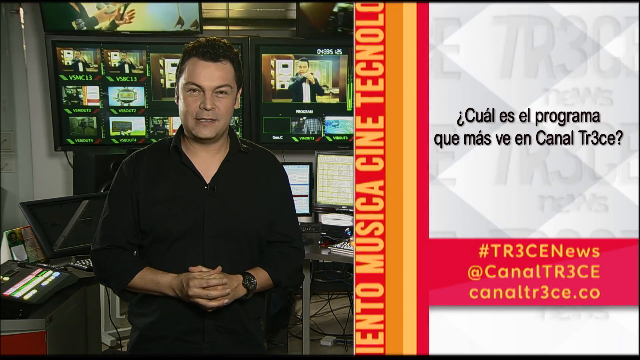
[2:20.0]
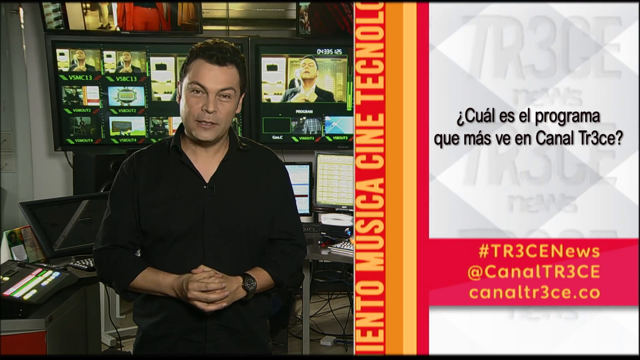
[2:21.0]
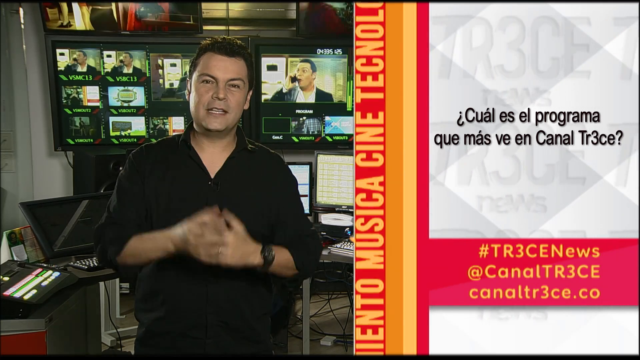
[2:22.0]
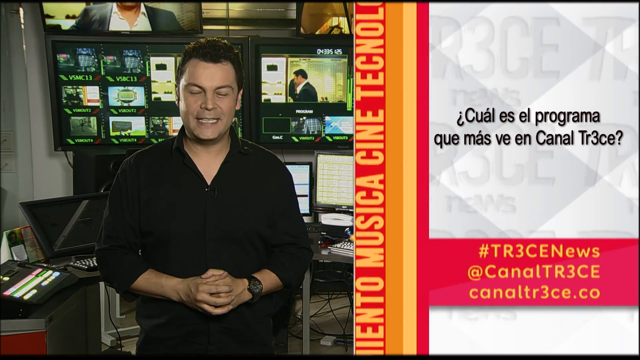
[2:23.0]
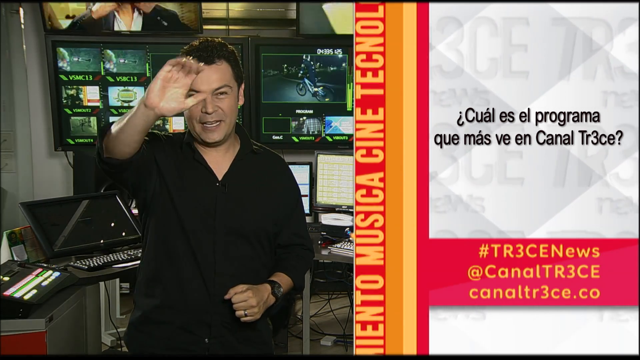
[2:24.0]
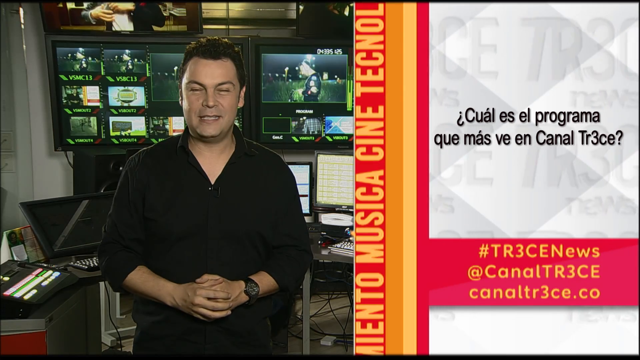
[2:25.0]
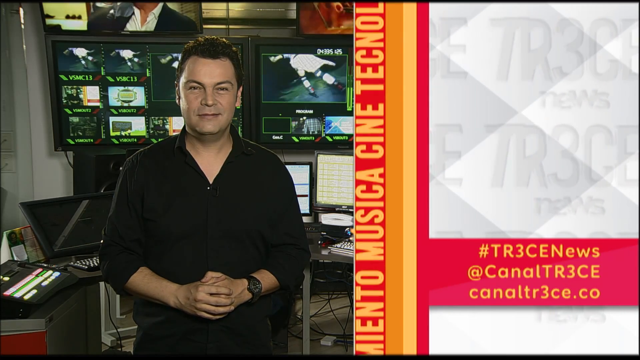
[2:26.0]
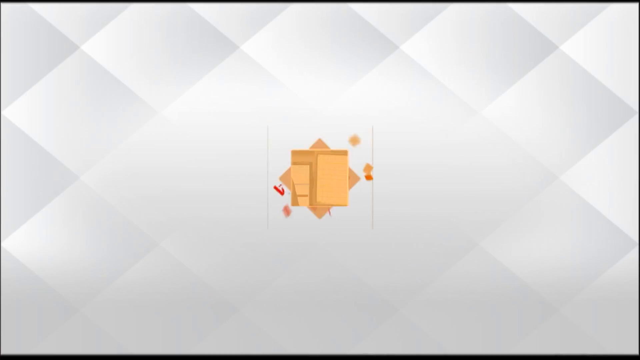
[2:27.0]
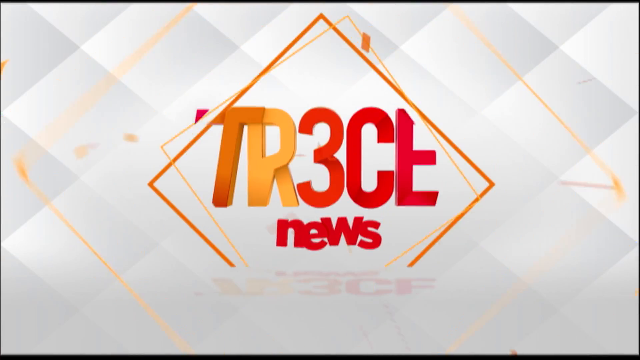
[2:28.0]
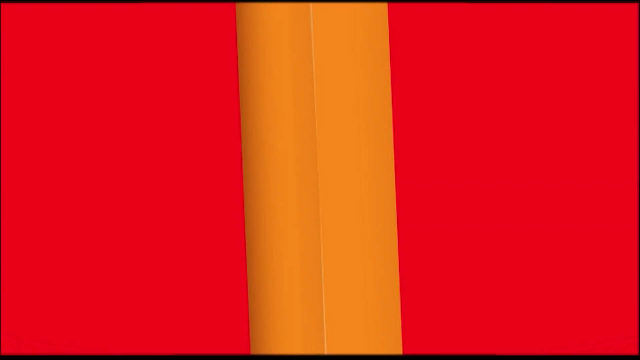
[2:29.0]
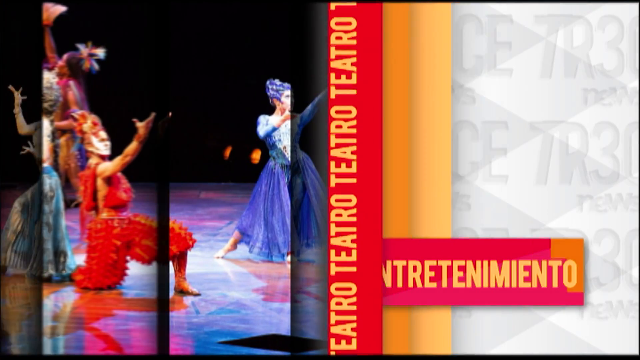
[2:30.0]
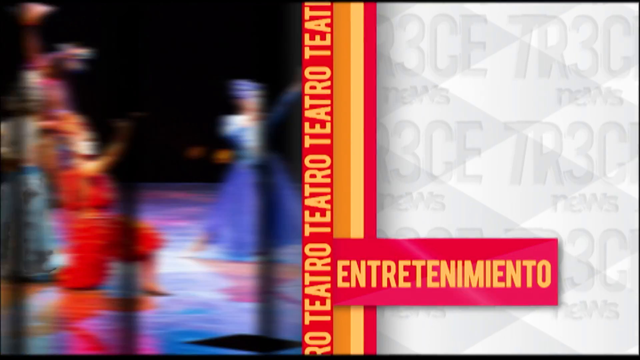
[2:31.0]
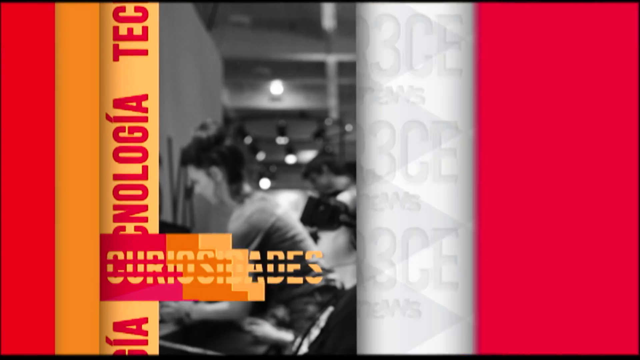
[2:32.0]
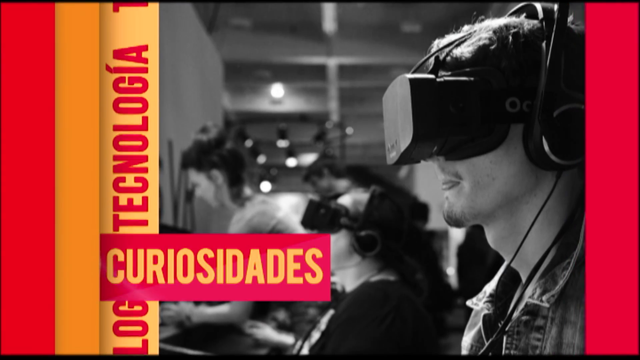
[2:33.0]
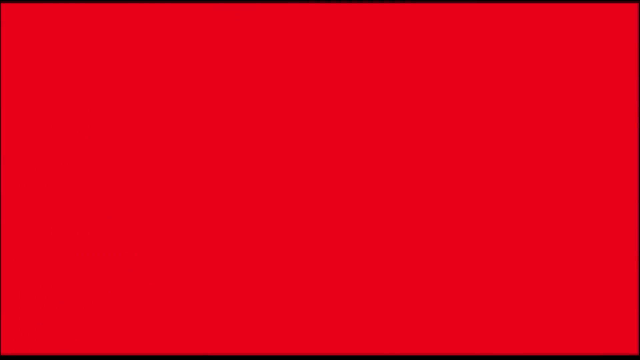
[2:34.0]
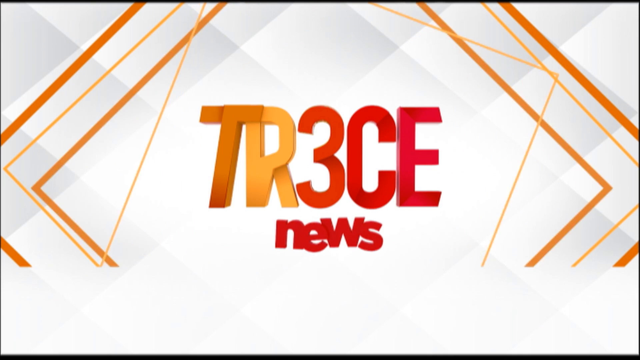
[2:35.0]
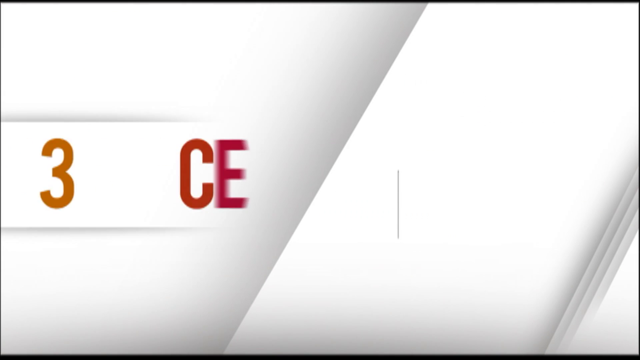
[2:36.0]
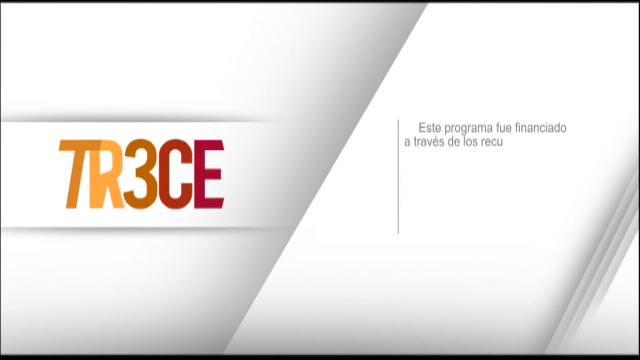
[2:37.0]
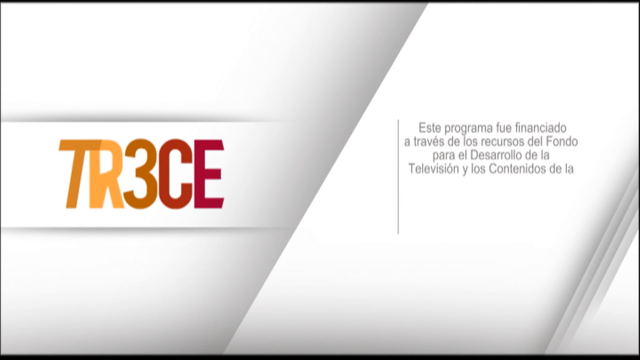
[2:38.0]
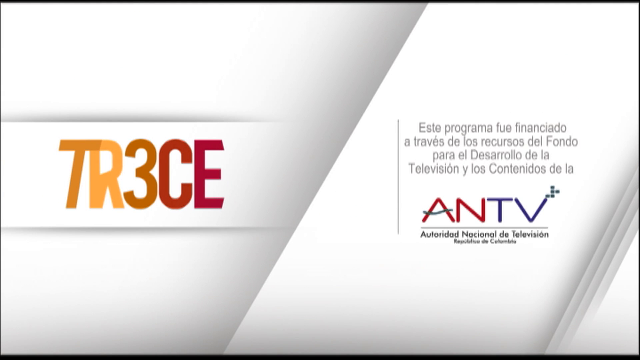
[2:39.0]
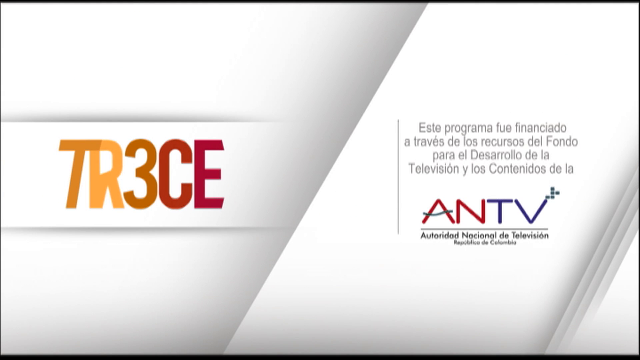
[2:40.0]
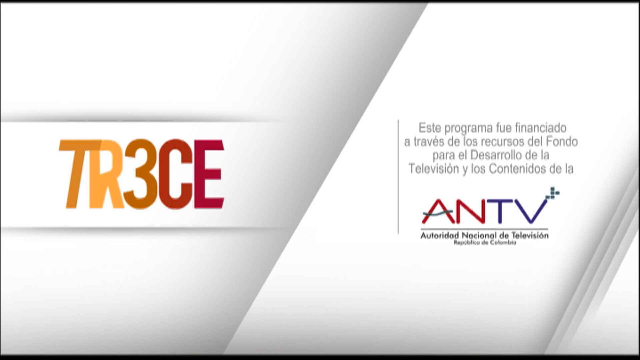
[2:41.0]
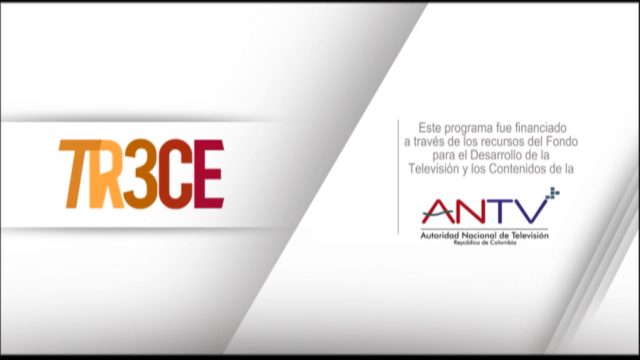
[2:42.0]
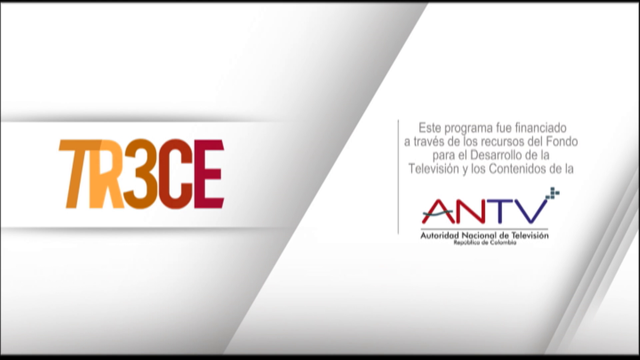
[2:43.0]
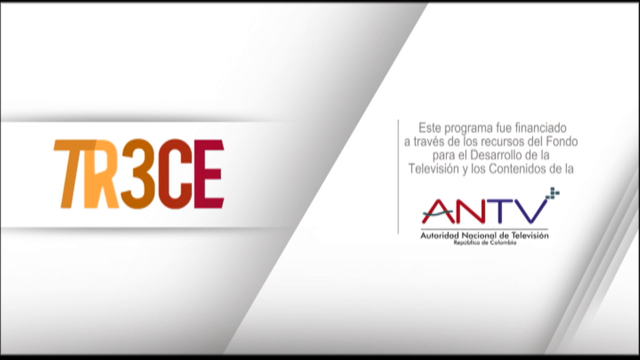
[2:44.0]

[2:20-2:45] A man who is a reporter for TR3CE News at CanalTR3CE.co is shown; he has black hair, wears a black shirt and has a black watch on his left hand. He is reporting about some pets and makes many gestures: he raises his hand, opens his arm to show something, and then returns to a resting position with his fingers interlocked. In the background are many screens with activities going on, one showing a video of a man in a black suit and white shirt. The word "TR3CE" then pops up on a white background, surrounded by yellow, red and maroon frames, with "TR" in yellow and "3CE" and "News" in red. Next, a group of people is shown browsing the internet; one of them wears a VR set and seems to be enjoying a view in it.